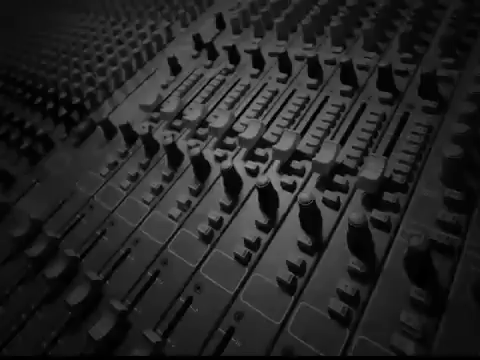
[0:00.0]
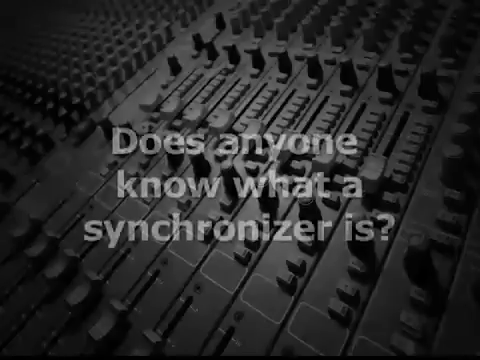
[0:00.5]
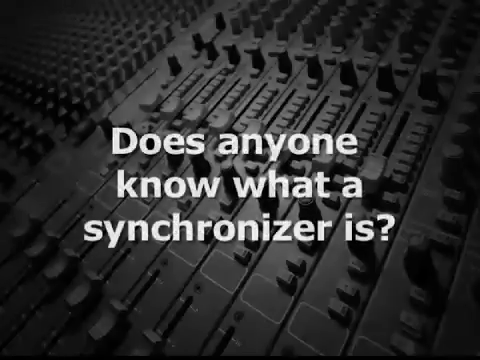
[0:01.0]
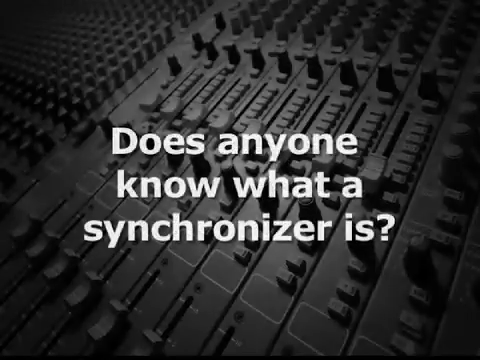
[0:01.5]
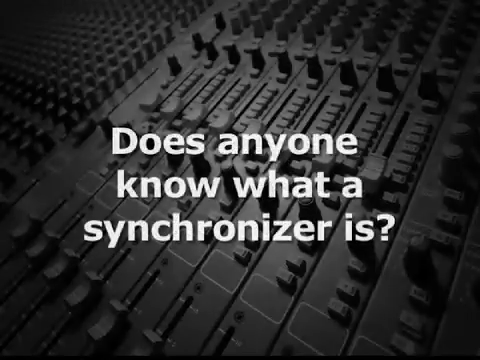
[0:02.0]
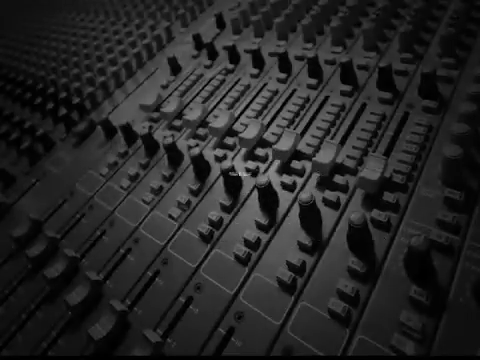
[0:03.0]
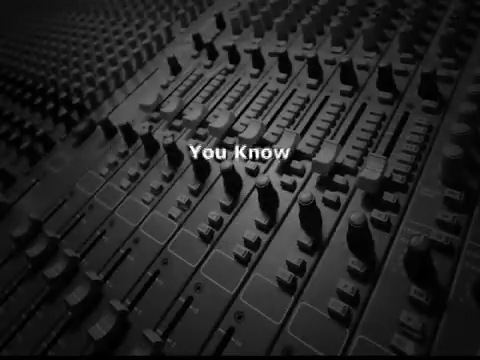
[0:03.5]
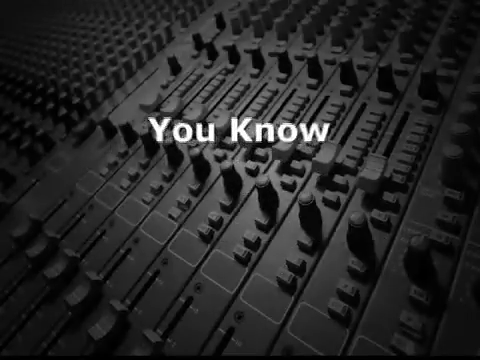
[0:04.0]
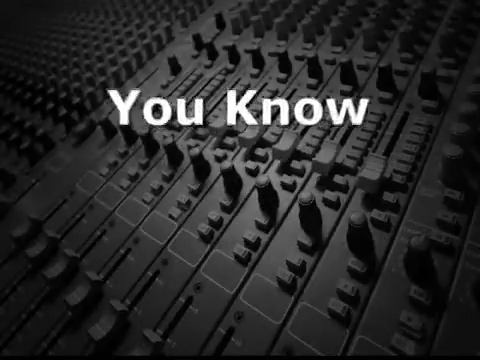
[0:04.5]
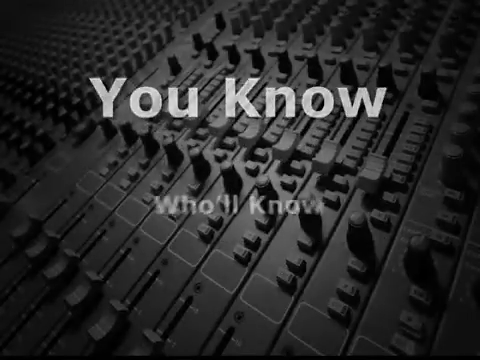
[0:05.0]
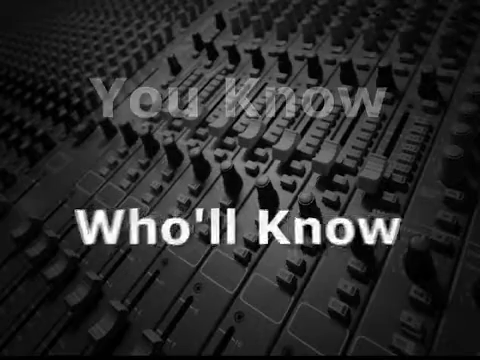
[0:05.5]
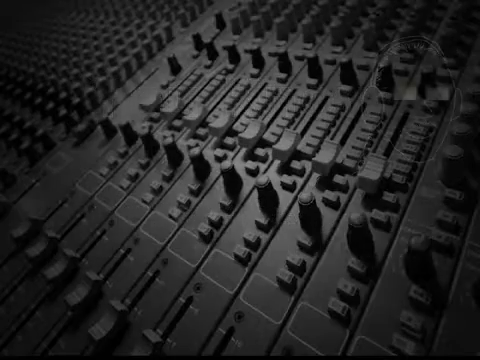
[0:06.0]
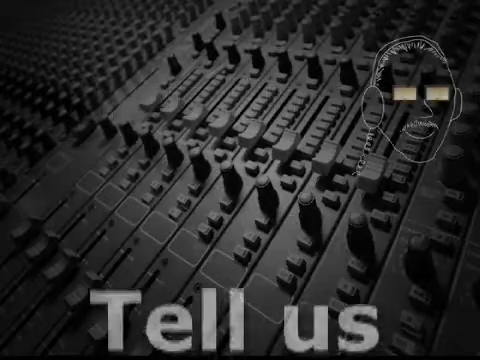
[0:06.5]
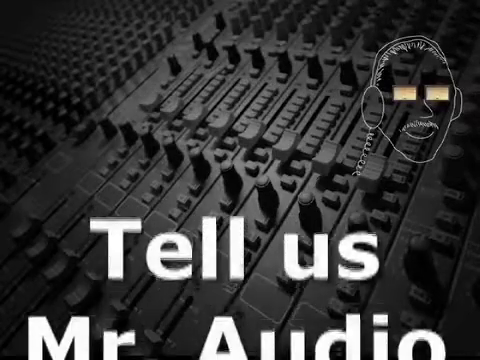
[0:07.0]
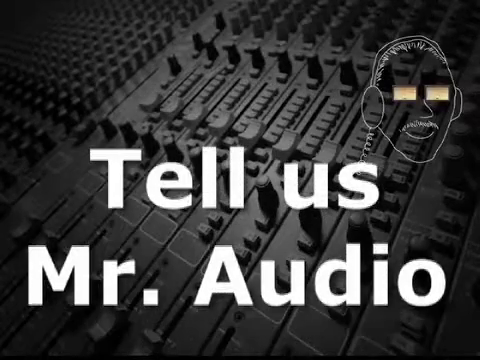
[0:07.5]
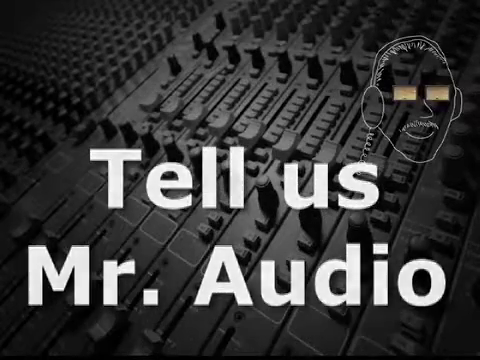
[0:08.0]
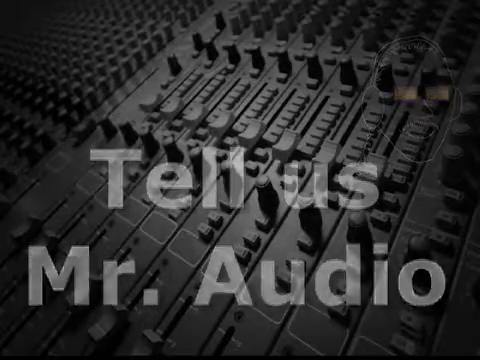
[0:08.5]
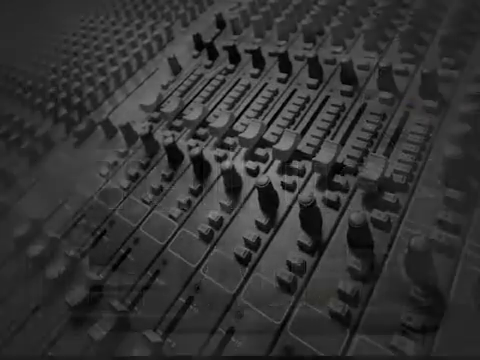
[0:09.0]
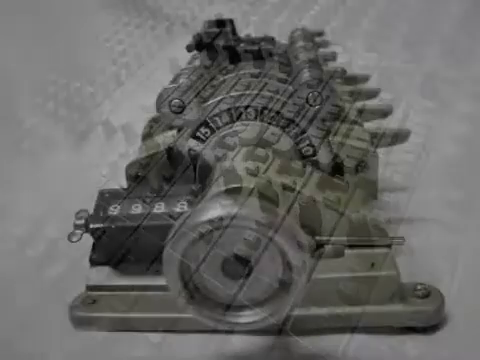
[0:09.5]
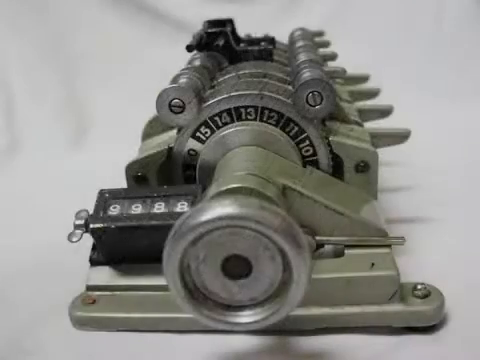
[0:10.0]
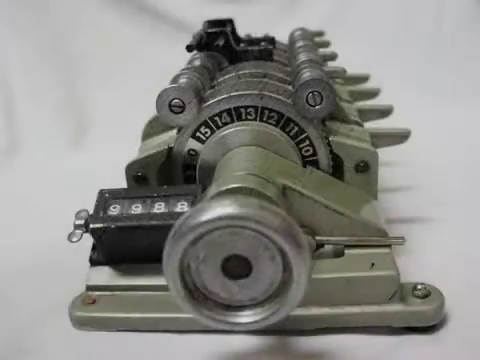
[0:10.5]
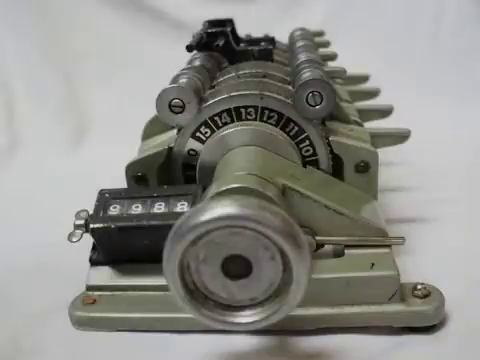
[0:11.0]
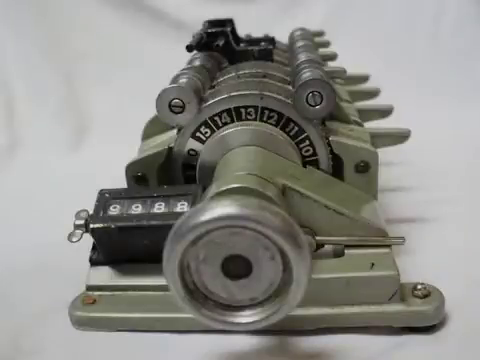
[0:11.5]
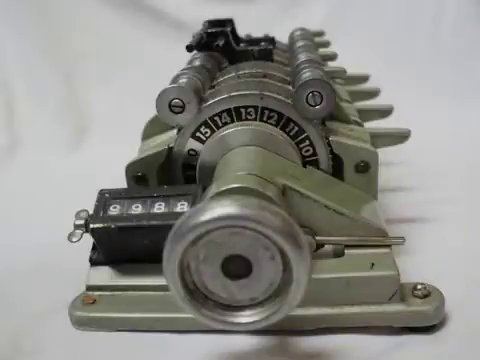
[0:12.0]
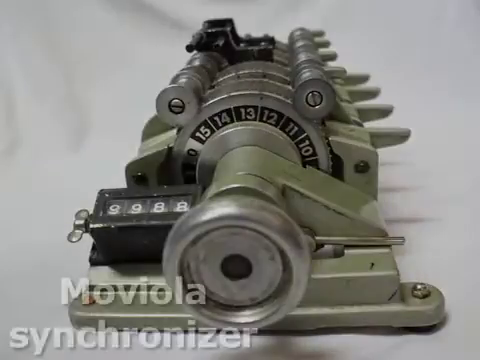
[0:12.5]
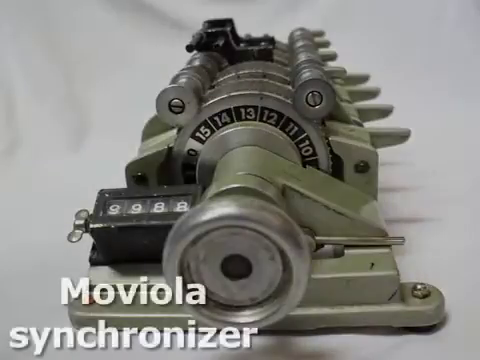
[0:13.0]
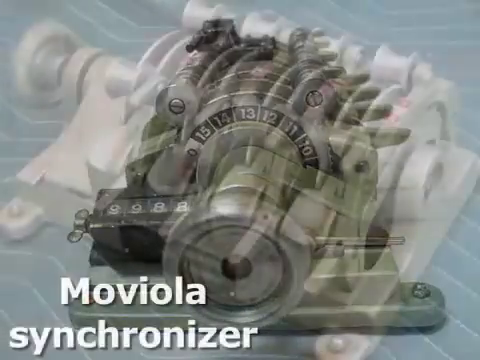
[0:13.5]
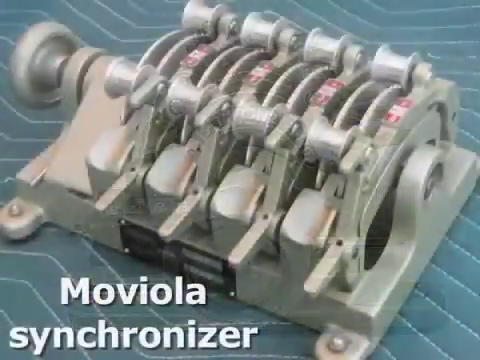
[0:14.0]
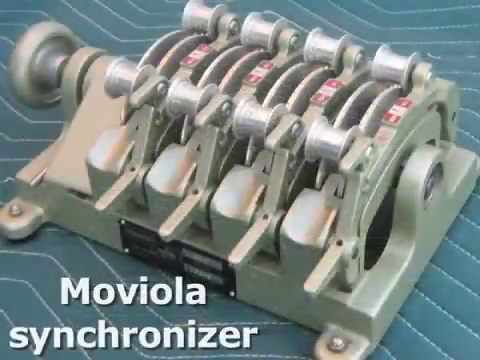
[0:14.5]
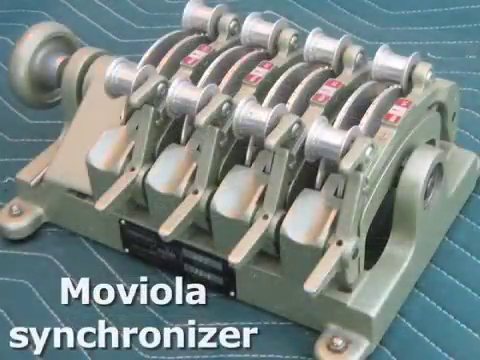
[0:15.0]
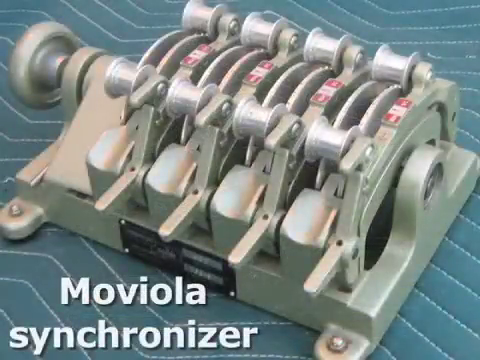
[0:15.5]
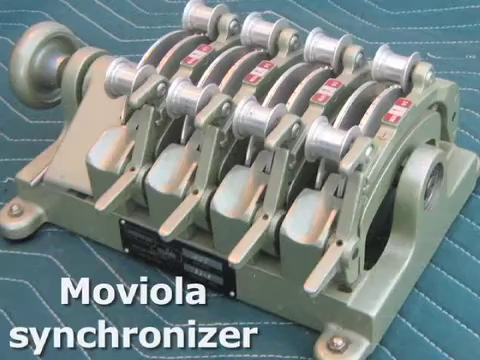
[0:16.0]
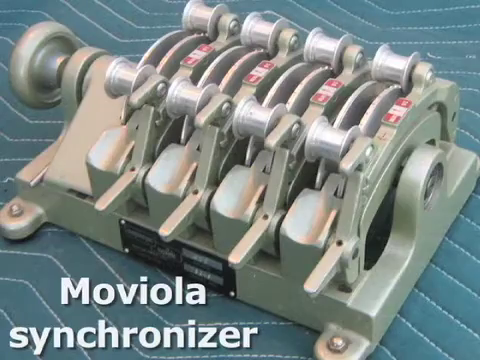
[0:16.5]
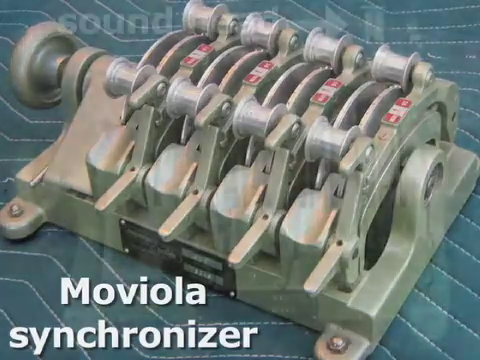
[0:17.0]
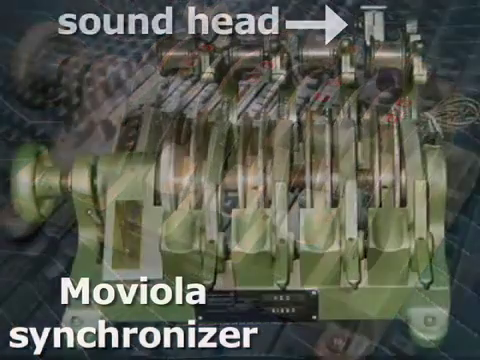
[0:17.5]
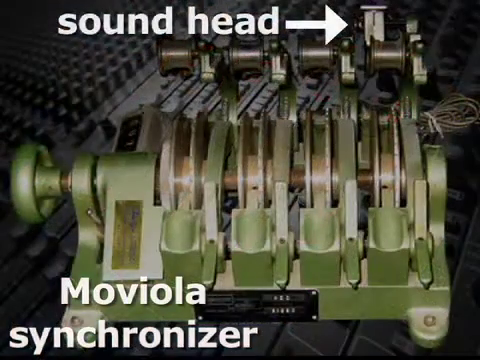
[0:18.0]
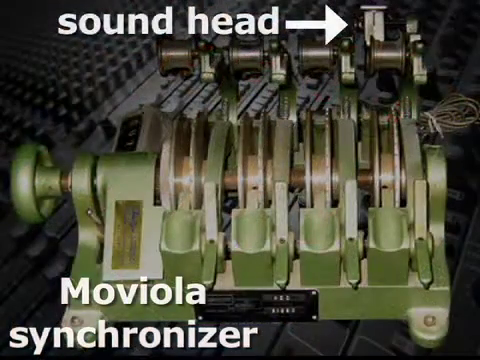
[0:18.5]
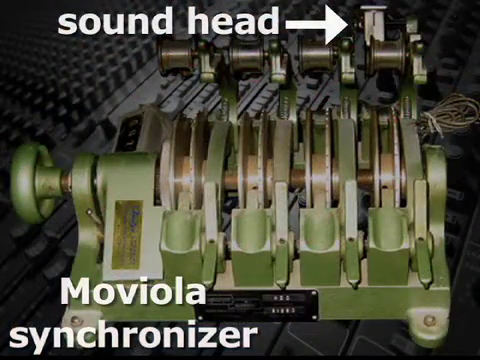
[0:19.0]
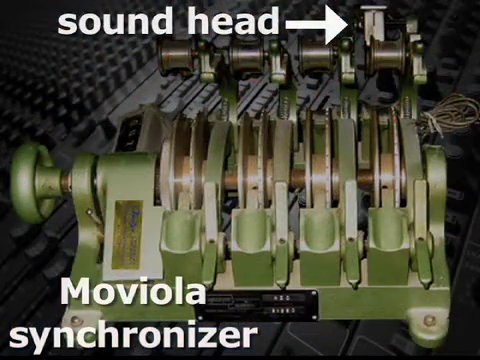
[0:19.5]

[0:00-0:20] A black-and-white frame shows what looks like a mixing board, with a vignette around the outside so it is lighter in the middle; the view is focused on just the knobs and sliders. A title in white text slides in: "does anyone know what a synchroniser is?" More text comes in, this time sort of zooming into the front of the screen: "you'll know, who'll know?" Then "tell us Mr. Audio" pops up from the bottom with a little line drawing of a man with glasses and a ponytail. The shot changes to what looks like an old-school counting device, with what looks like counters and a couple of dials. Text identifies it as a "Moviola synchroniser" and, in the same bold white type, points out where the sound head is.